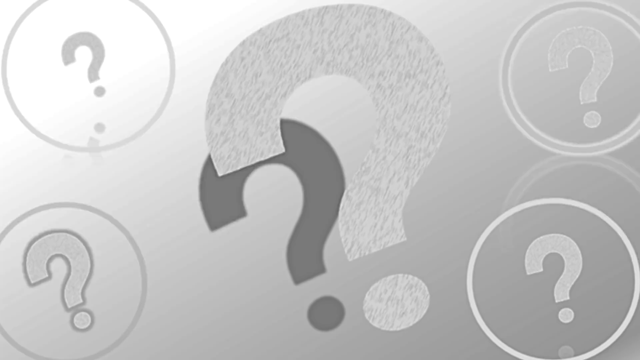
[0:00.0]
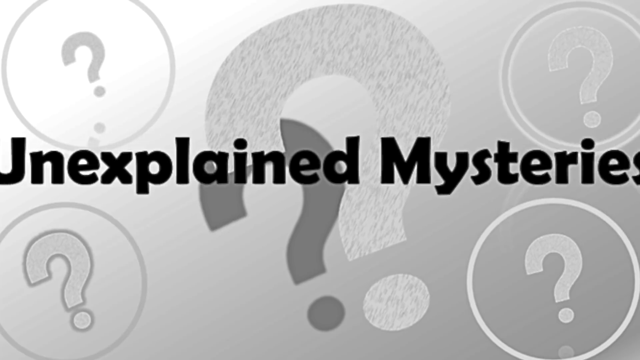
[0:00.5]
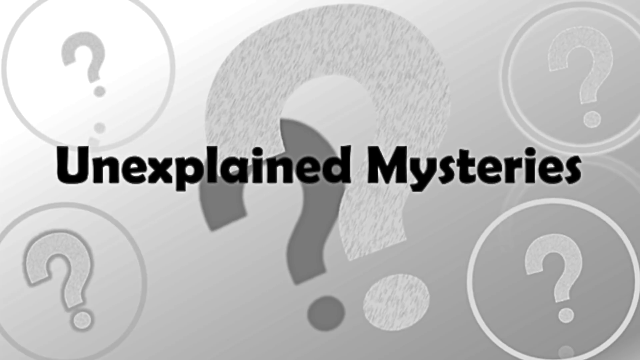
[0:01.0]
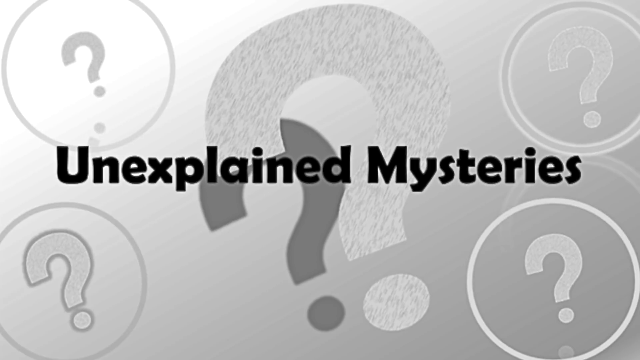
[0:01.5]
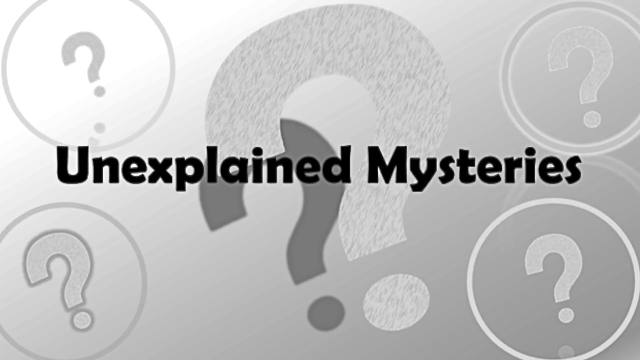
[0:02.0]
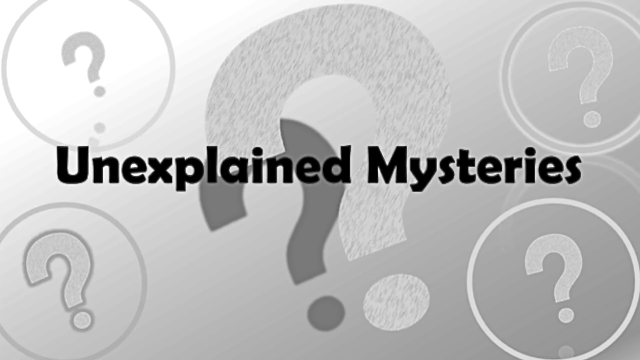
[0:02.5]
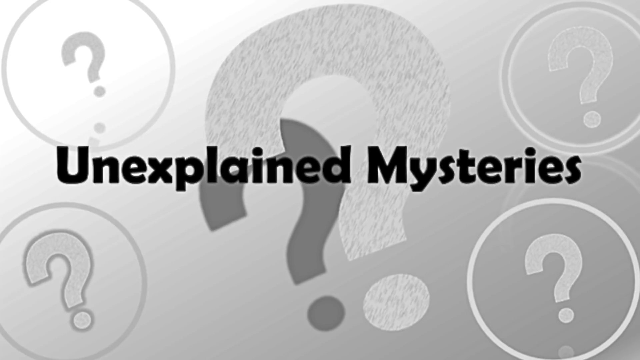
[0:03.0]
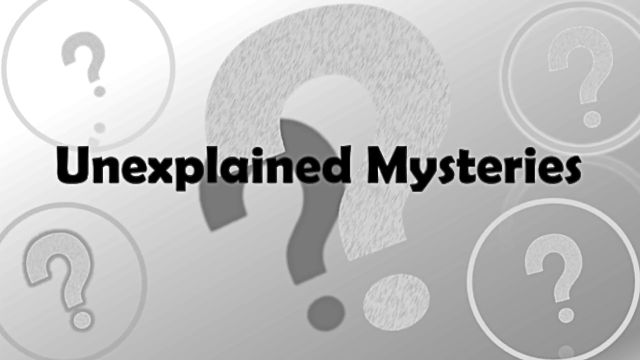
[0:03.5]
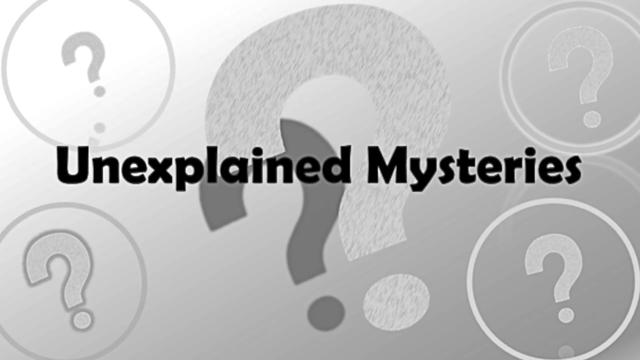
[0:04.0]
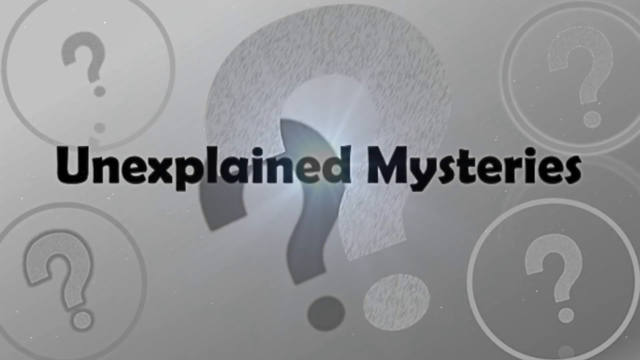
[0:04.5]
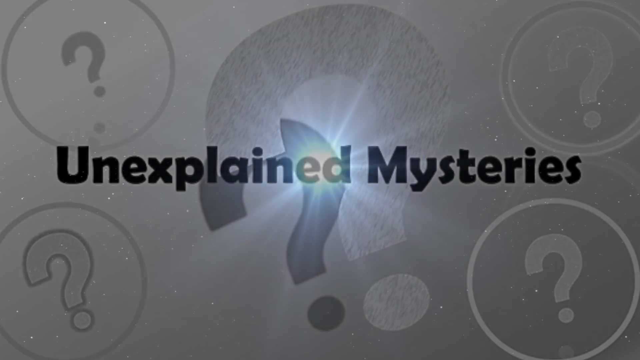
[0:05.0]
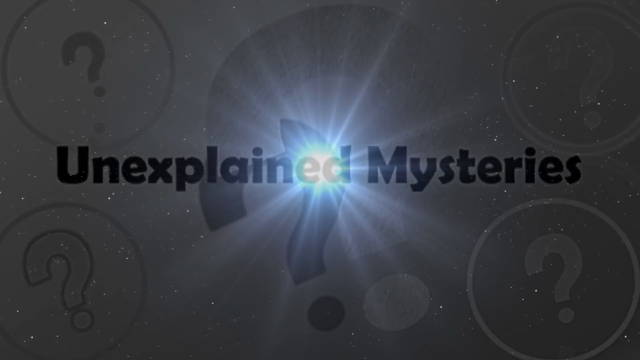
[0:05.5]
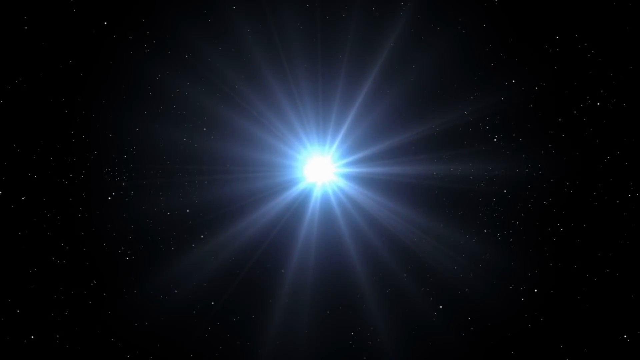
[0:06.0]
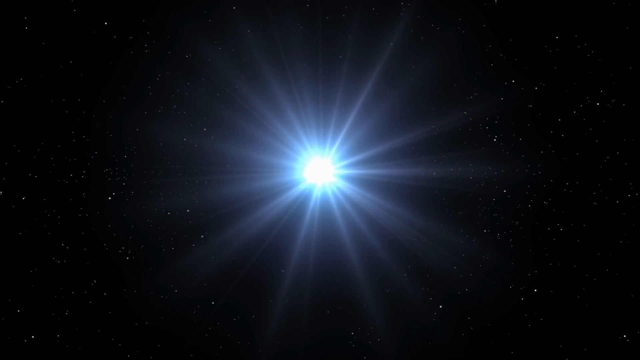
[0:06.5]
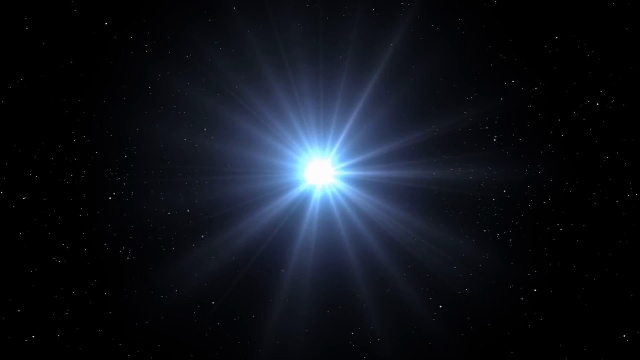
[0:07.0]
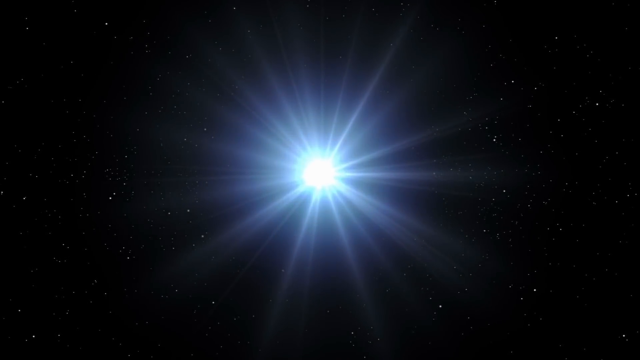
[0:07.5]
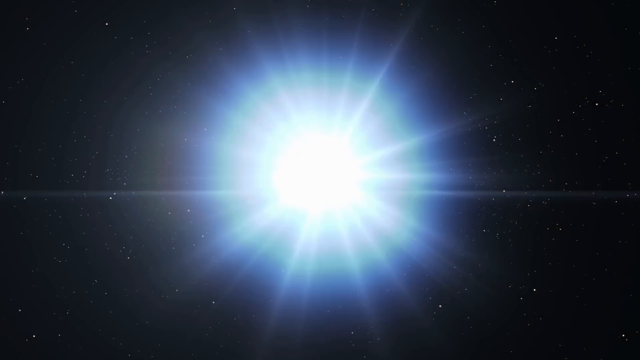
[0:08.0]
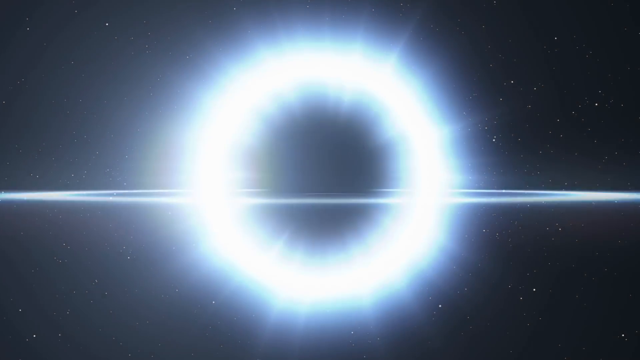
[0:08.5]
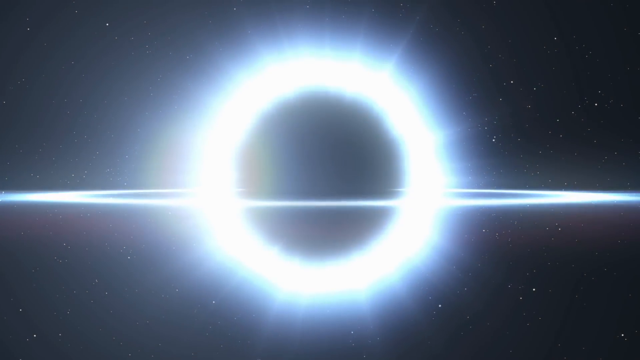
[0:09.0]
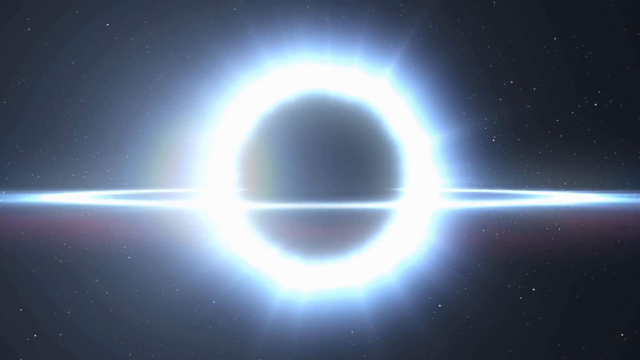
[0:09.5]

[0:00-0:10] Against an ombre gray background there are many question marks, some in circles and some darker than others, all in shades of gray. About three of the question marks have a circle around them. In the middle, black text reads "unexplained mysteries". This fades, and what looks like the galaxy appears, with a really bright circle that gets bigger and bigger. The background is almost black, with dots all around that seem to be stars.